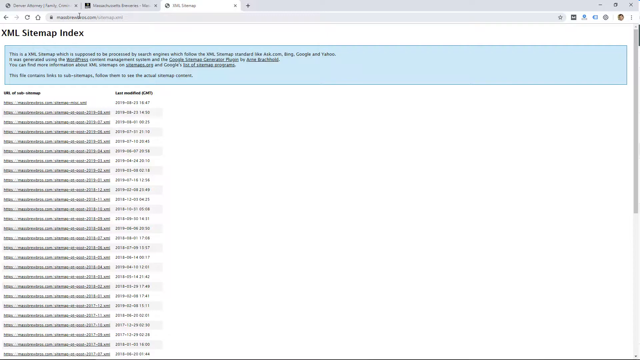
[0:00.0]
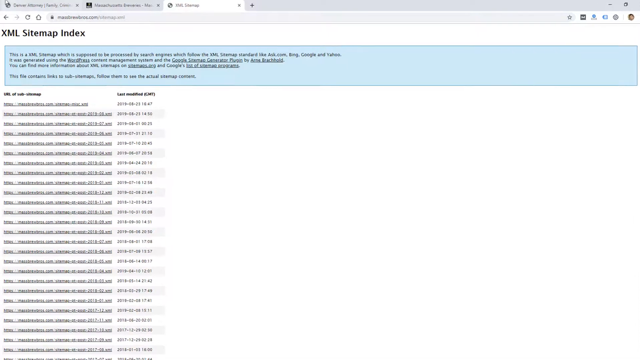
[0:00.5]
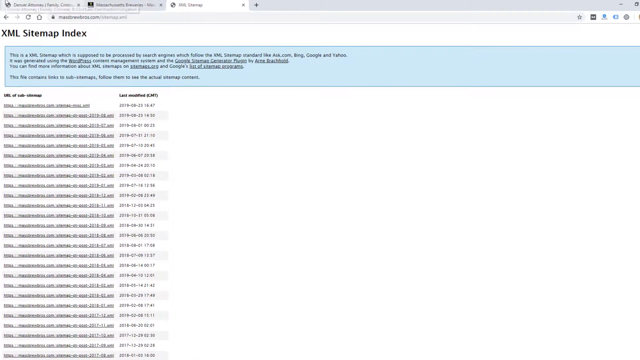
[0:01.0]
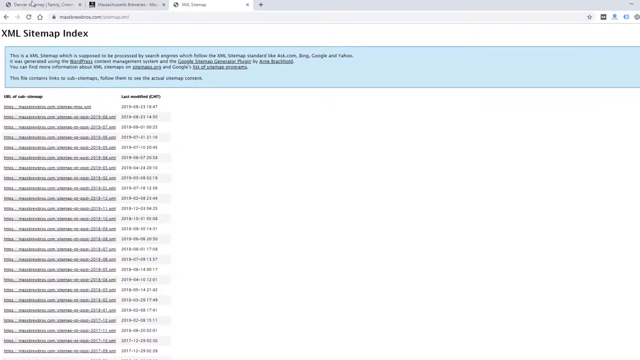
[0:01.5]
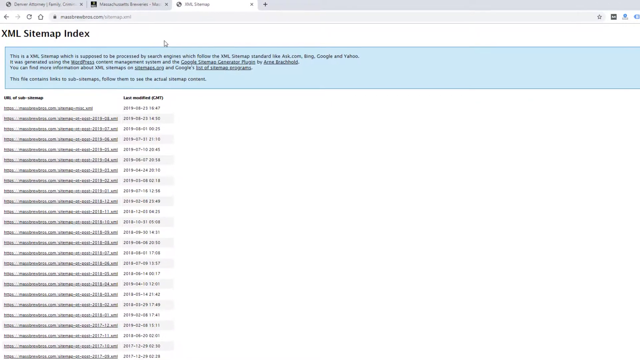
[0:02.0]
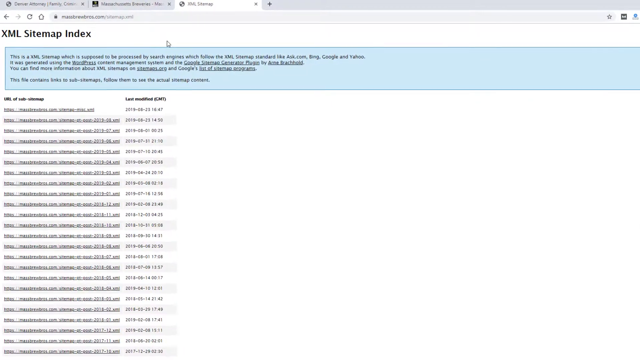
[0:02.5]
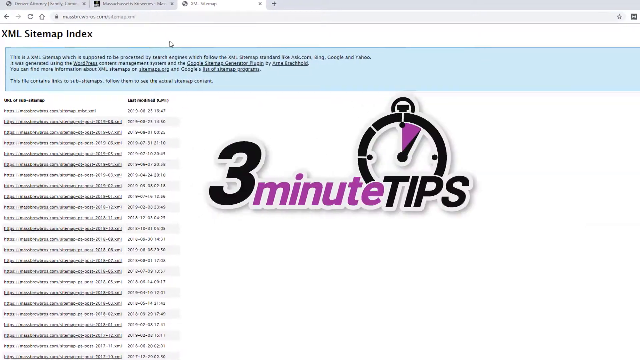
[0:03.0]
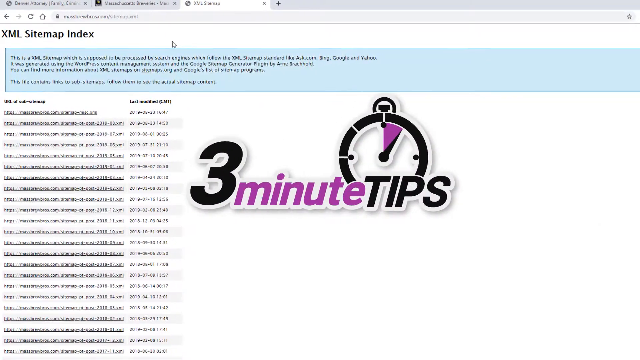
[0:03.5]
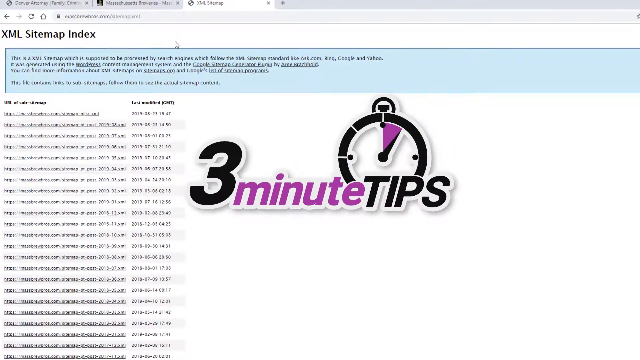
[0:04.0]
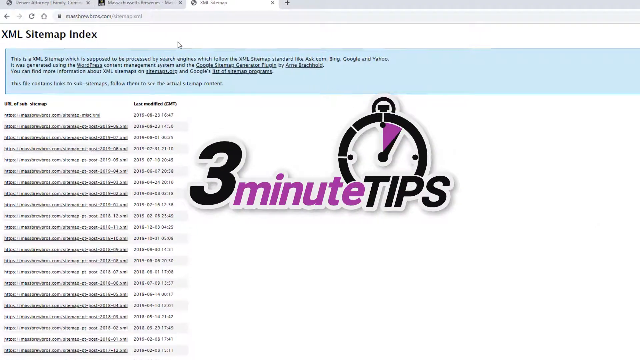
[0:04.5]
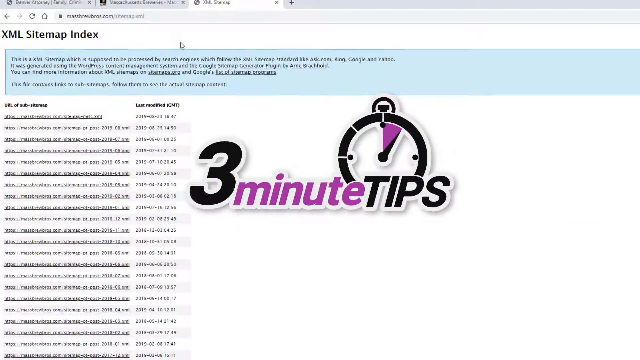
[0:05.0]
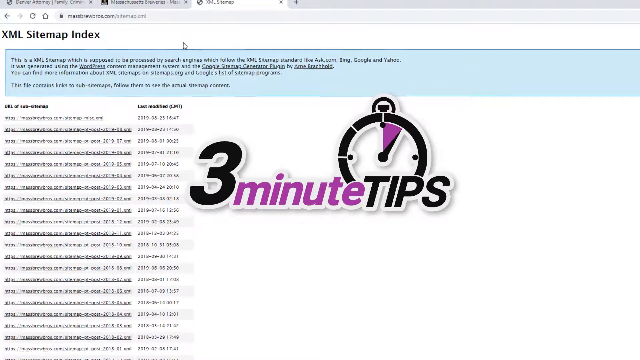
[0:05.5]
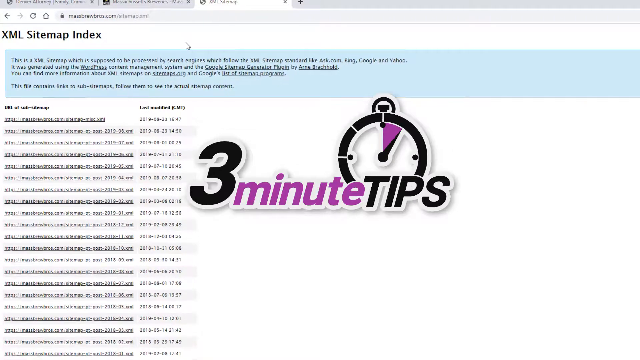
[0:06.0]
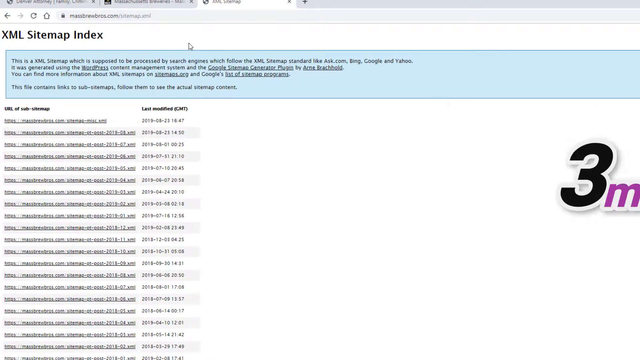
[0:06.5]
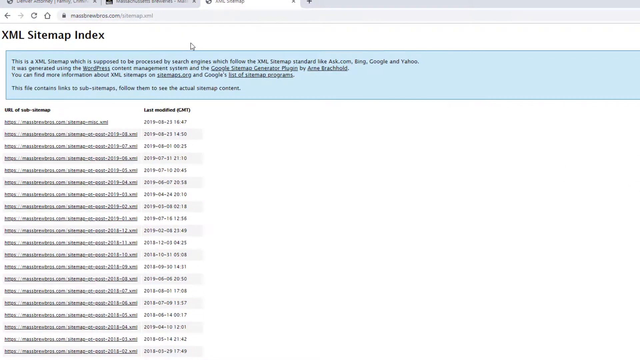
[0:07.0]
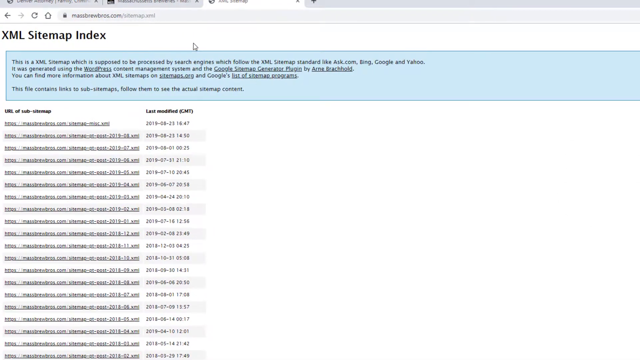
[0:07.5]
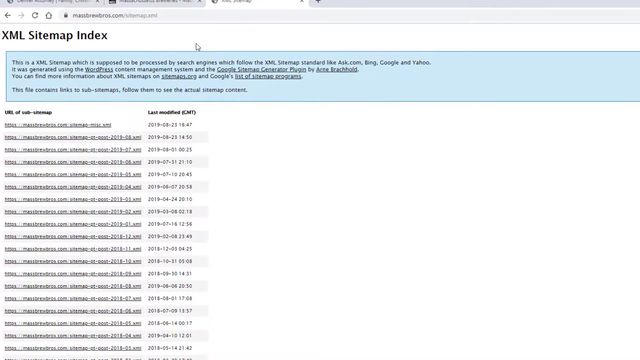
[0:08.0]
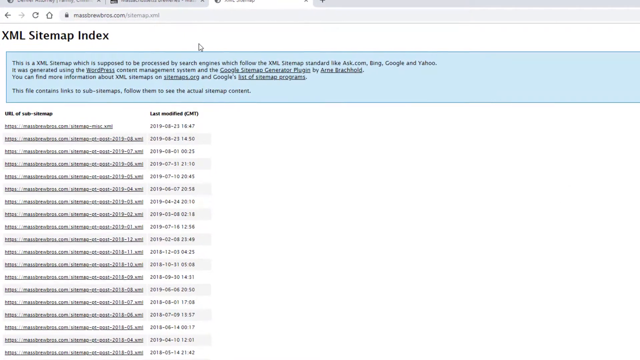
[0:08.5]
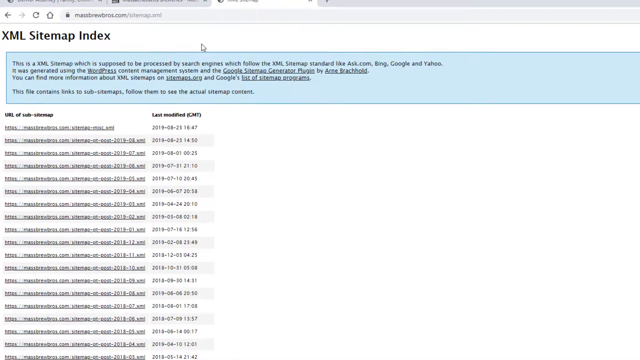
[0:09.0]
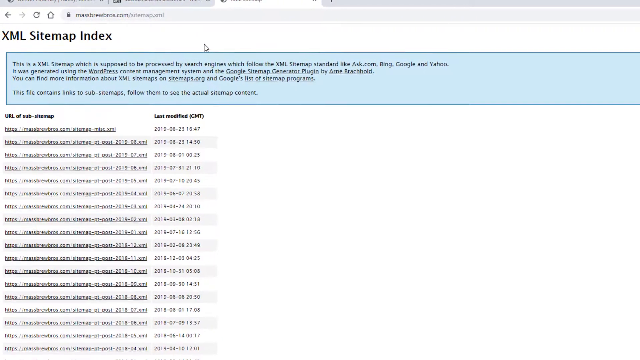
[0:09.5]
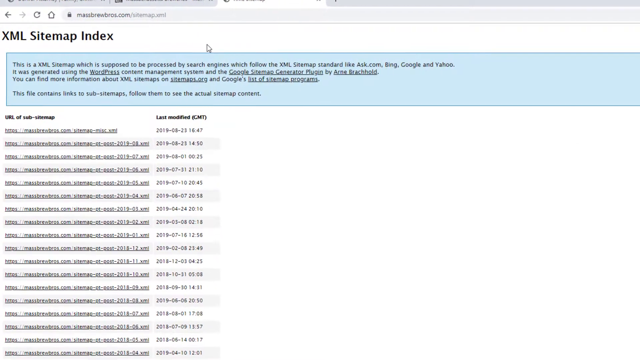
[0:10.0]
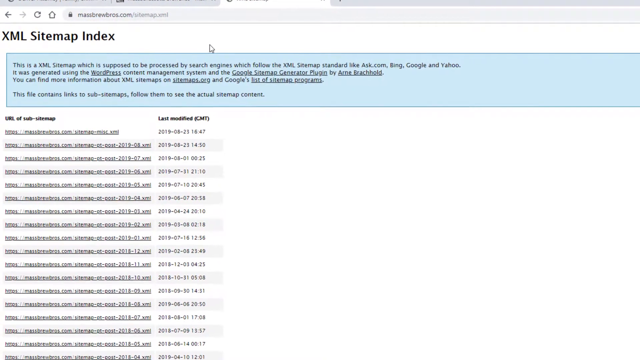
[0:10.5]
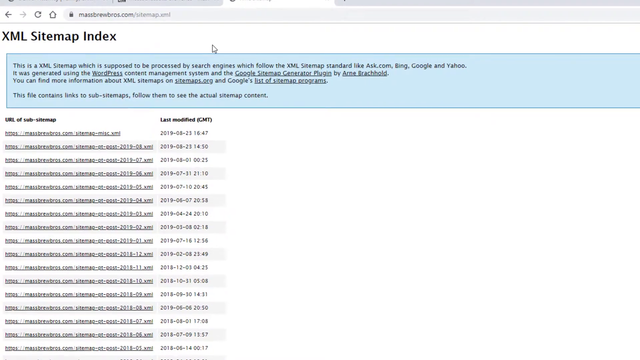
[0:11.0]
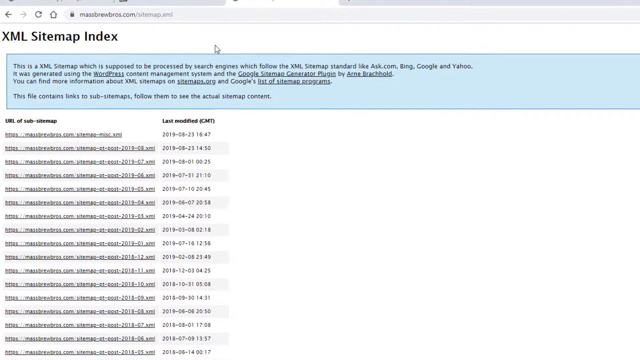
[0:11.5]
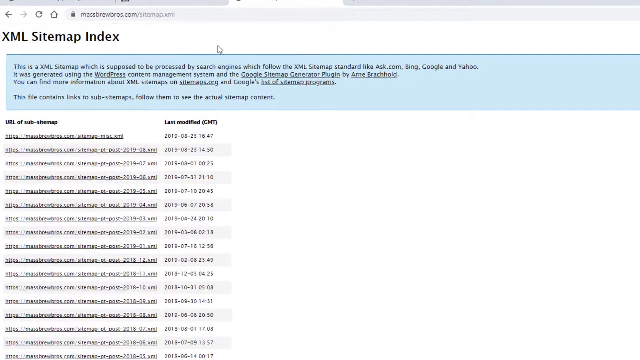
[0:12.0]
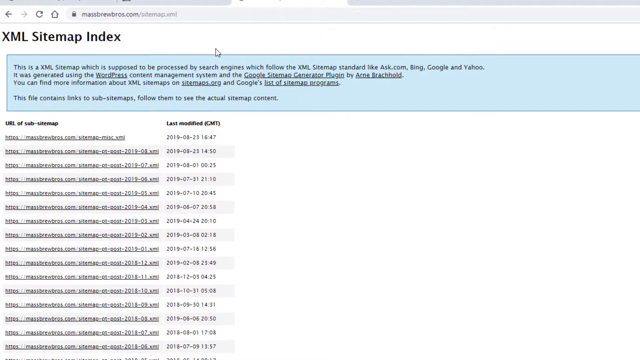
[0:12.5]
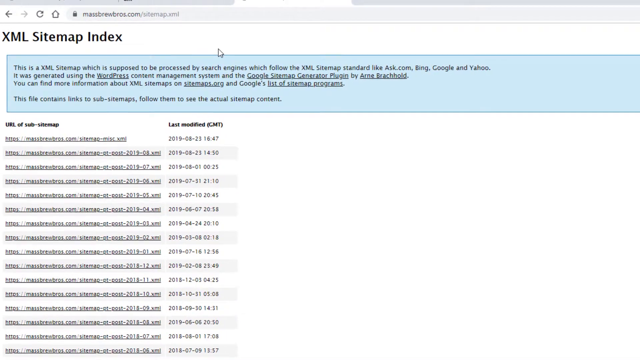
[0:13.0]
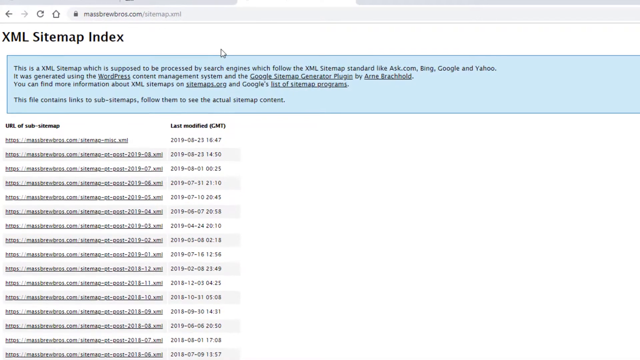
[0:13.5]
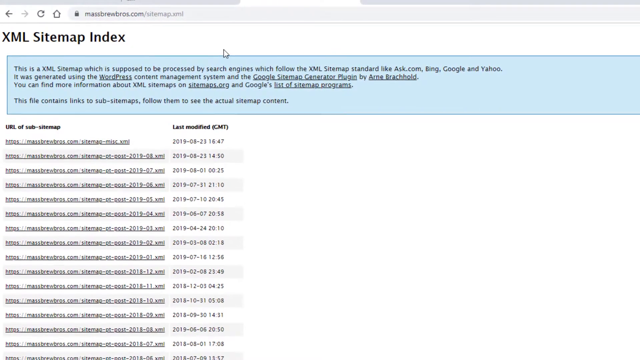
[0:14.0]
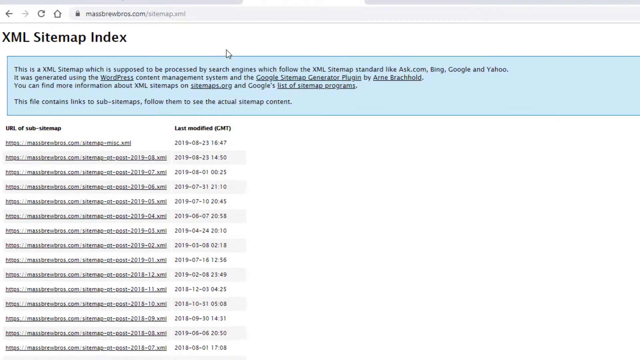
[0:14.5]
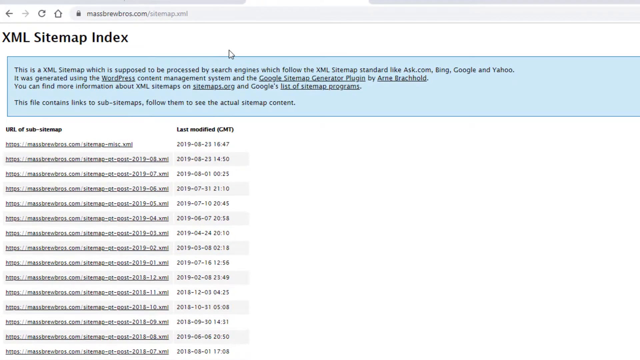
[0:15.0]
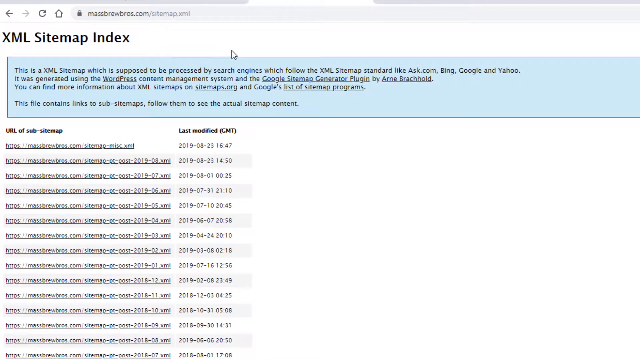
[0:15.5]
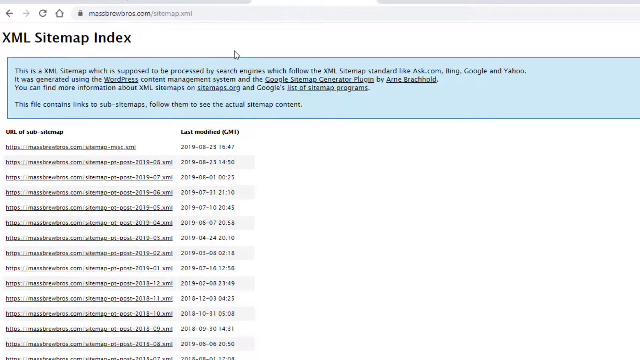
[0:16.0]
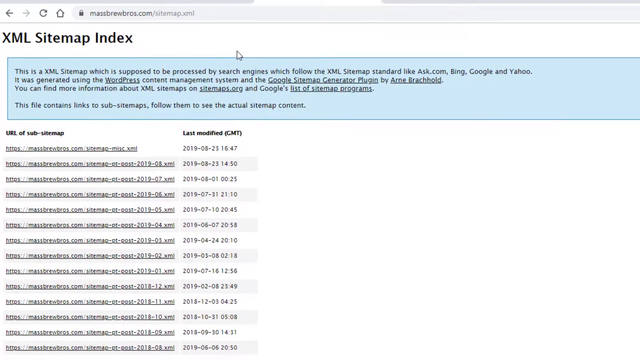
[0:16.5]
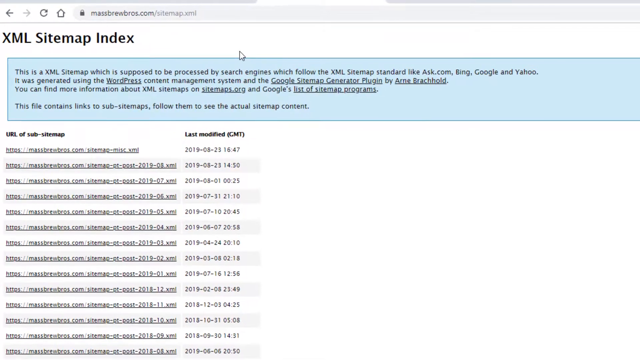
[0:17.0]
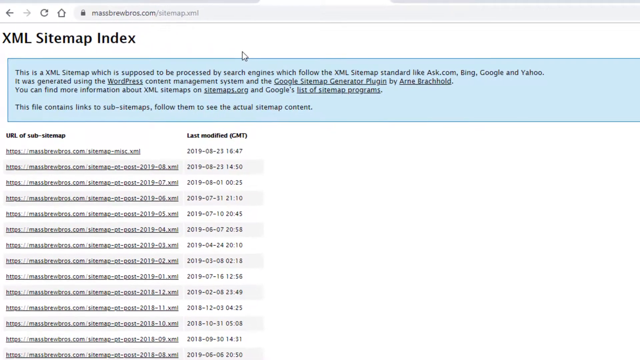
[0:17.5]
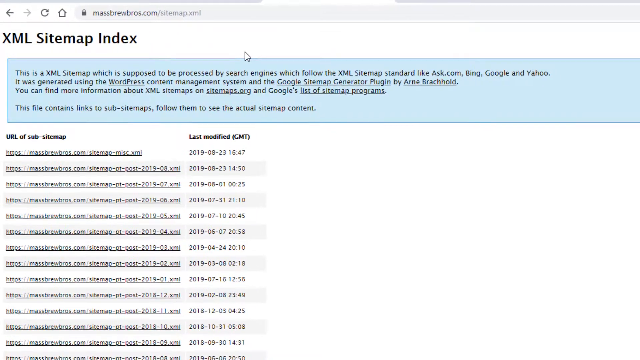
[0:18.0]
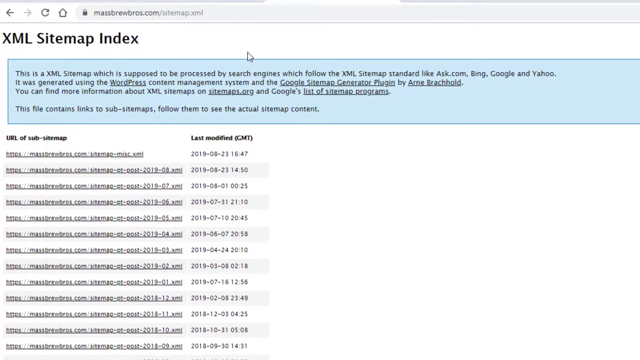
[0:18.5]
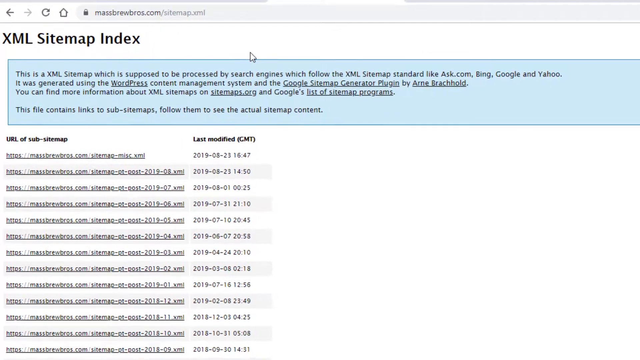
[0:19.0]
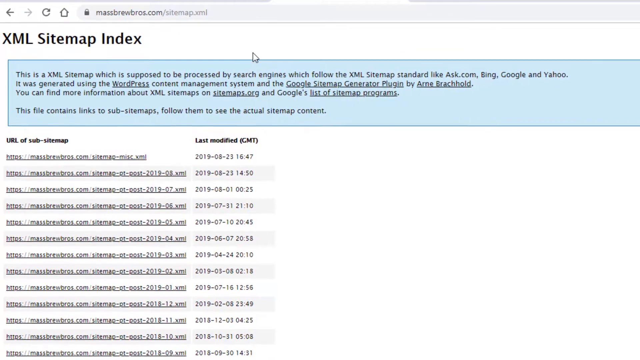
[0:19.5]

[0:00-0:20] The video opens on a white screen that looks like a page on a computer website. At the top left, black letters read "XML site map index." Below that is a list of what may be URLs or numbers, and a blue rectangle with black writing in it runs horizontally across the top of the screen. The view zooms in. A mouse pointer is at the top middle of the screen, and three tabs are open at the top. Words come down onto the screen reading "3 minute tips," with the number 3 in black, "minute" in purple and "tips" in black, and a small clock behind them. The words move to the right of the screen and disappear. The view keeps zooming in on text reading "URL of sub site map," with "last modified" to its right. A list of dates is under "last modified," and a list of underlined URLs is under the URL heading.